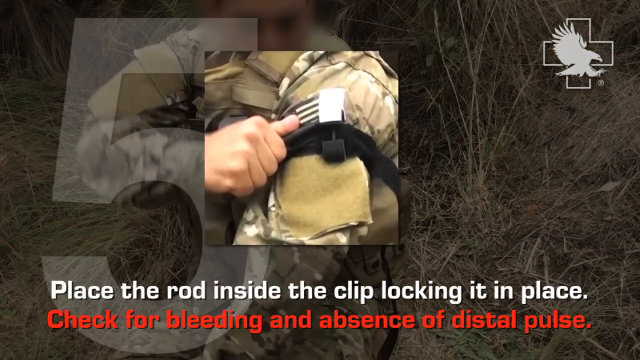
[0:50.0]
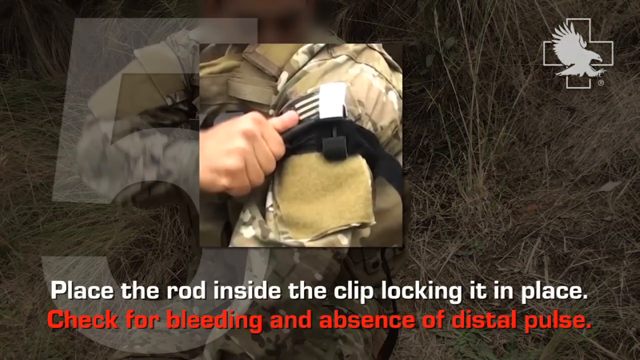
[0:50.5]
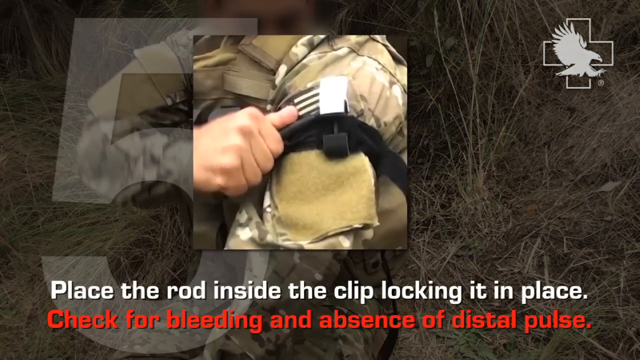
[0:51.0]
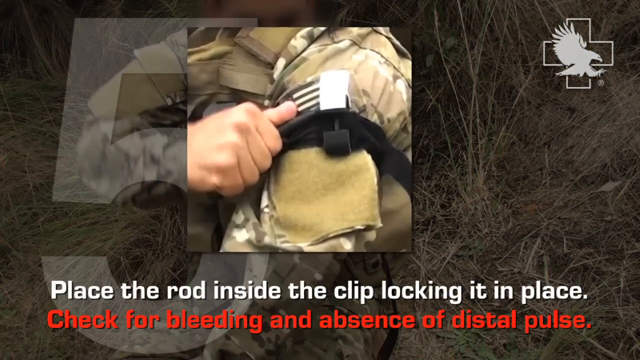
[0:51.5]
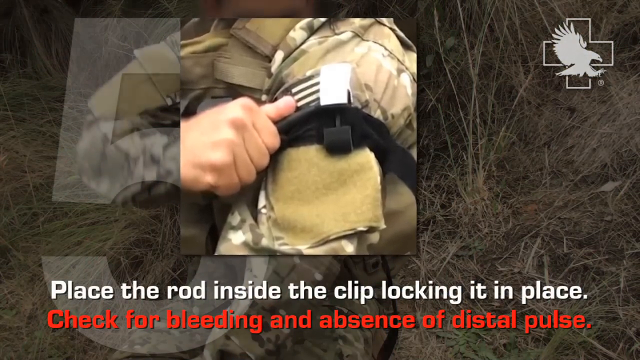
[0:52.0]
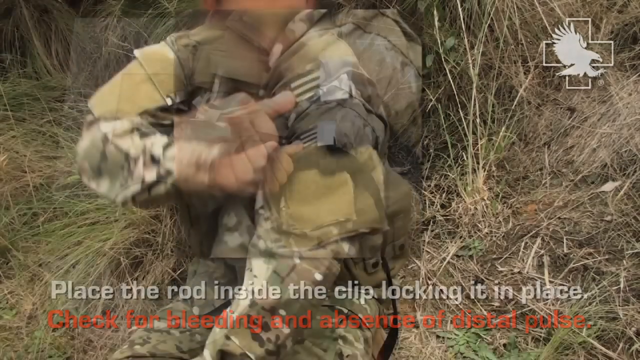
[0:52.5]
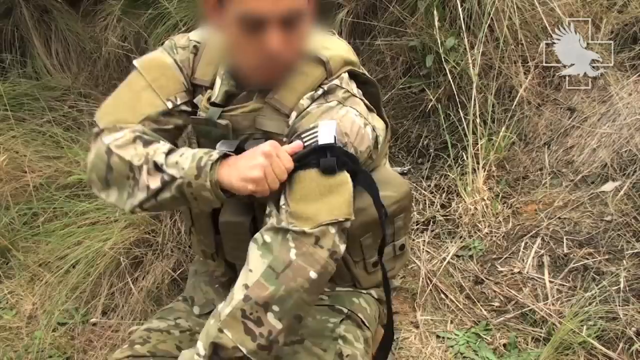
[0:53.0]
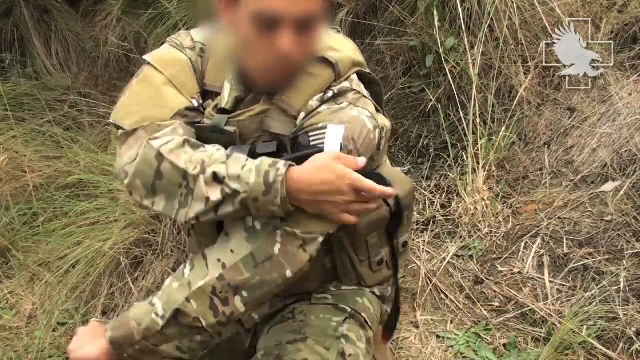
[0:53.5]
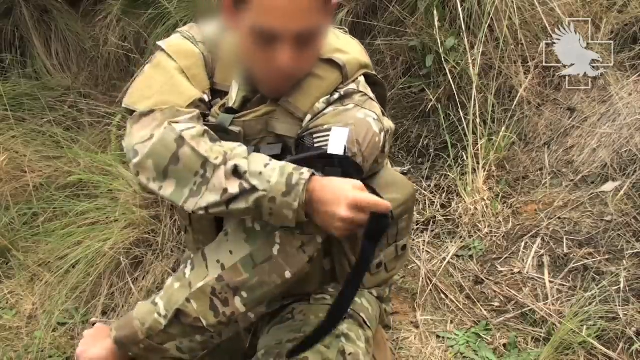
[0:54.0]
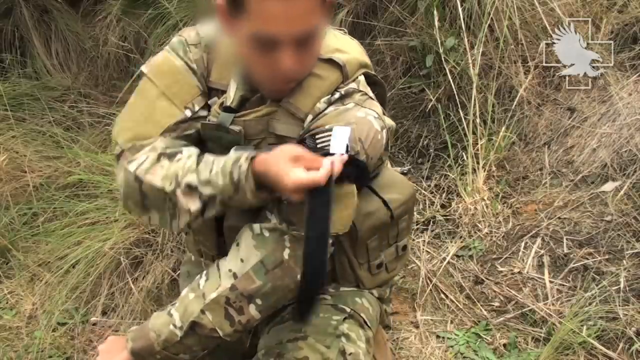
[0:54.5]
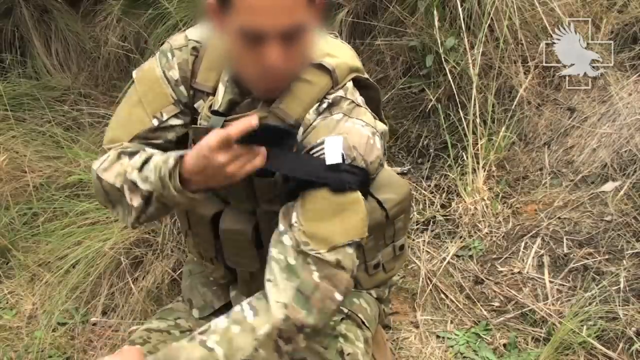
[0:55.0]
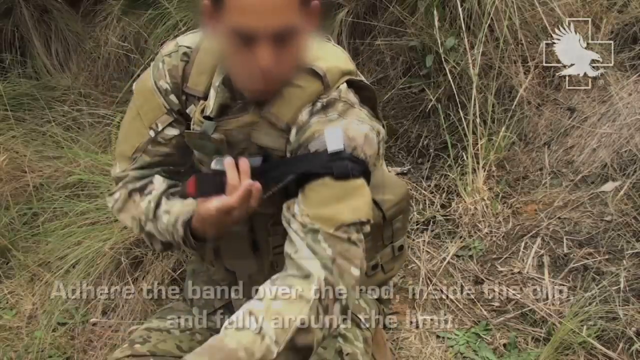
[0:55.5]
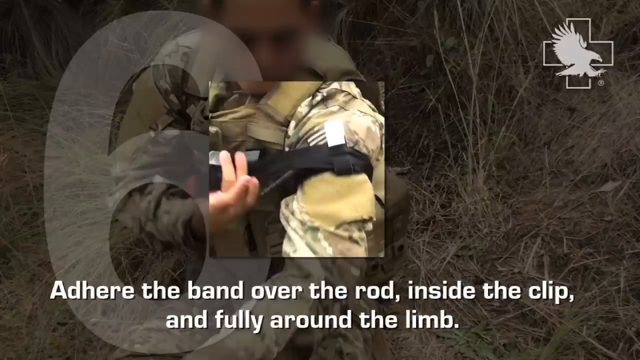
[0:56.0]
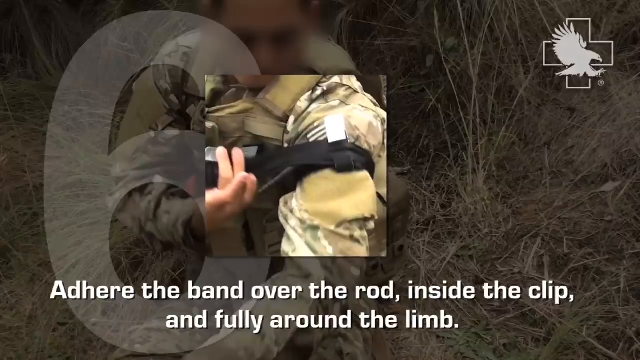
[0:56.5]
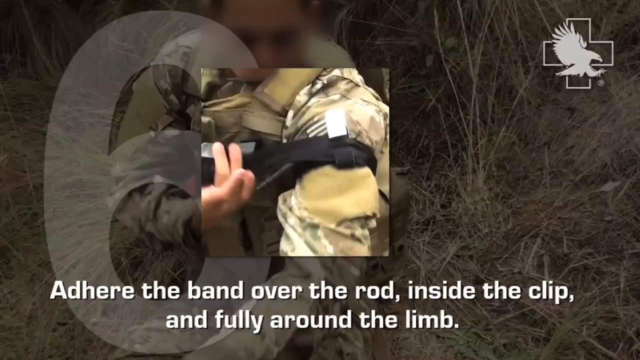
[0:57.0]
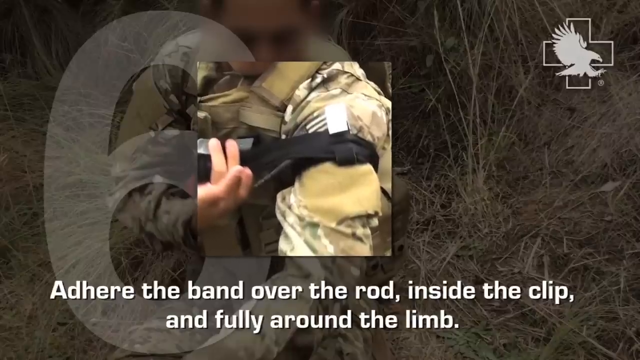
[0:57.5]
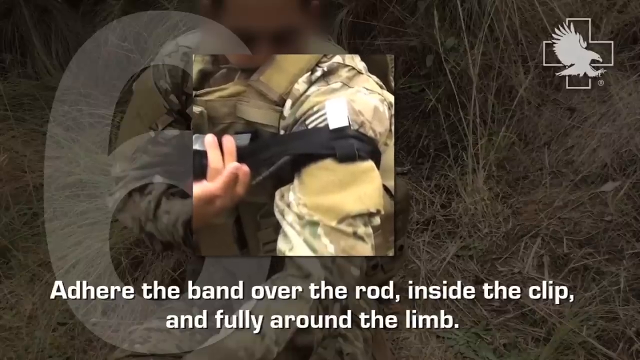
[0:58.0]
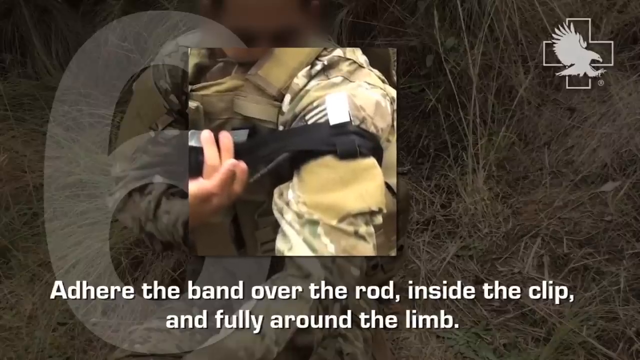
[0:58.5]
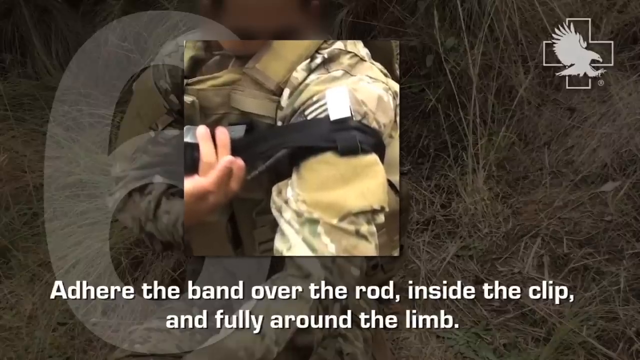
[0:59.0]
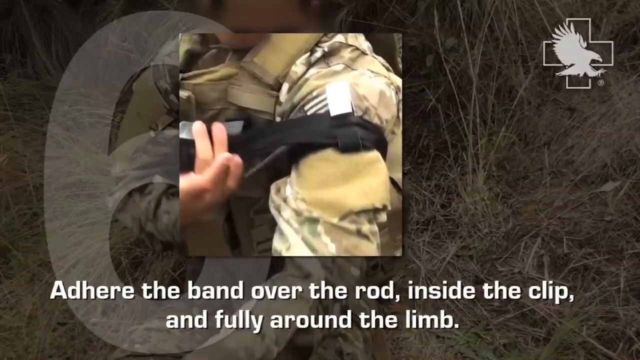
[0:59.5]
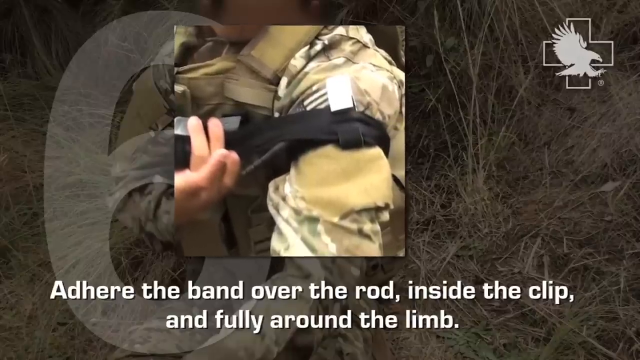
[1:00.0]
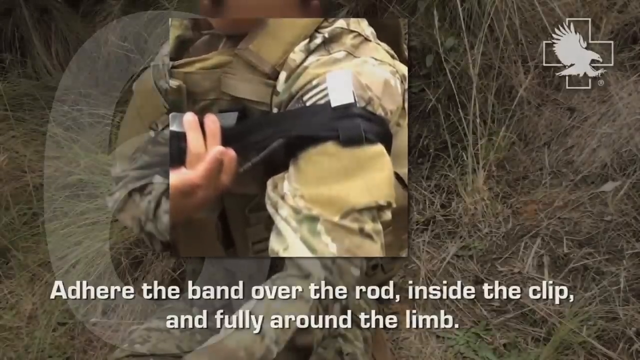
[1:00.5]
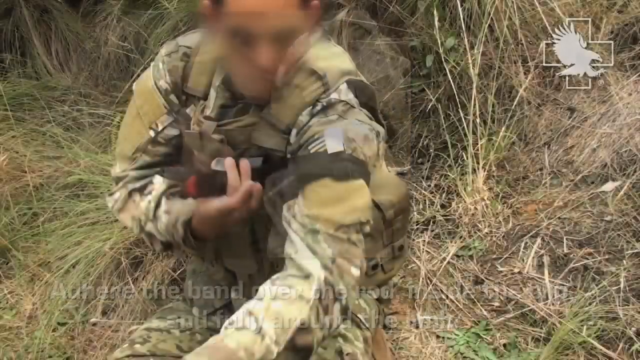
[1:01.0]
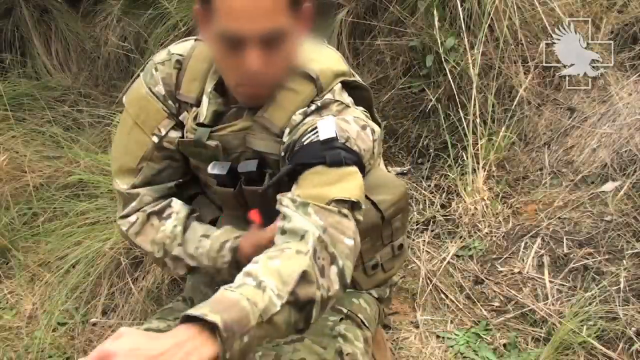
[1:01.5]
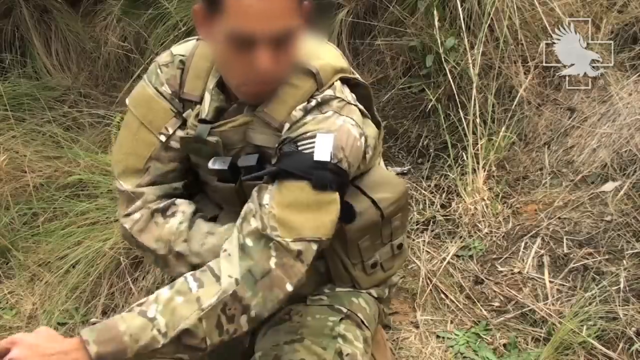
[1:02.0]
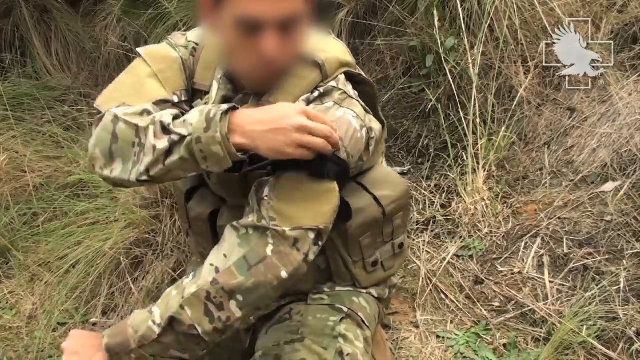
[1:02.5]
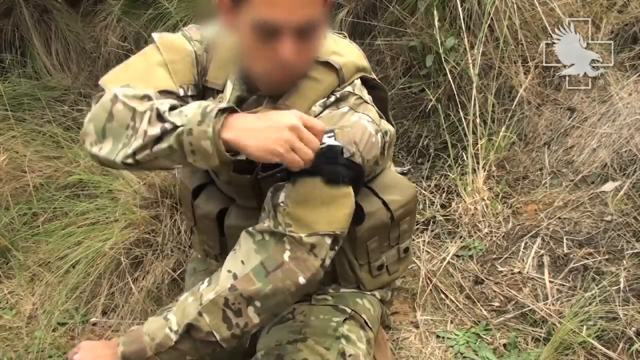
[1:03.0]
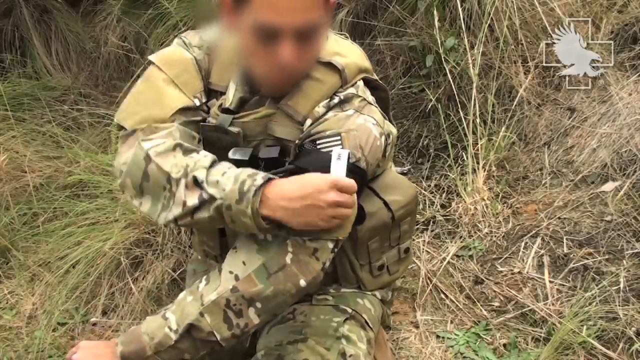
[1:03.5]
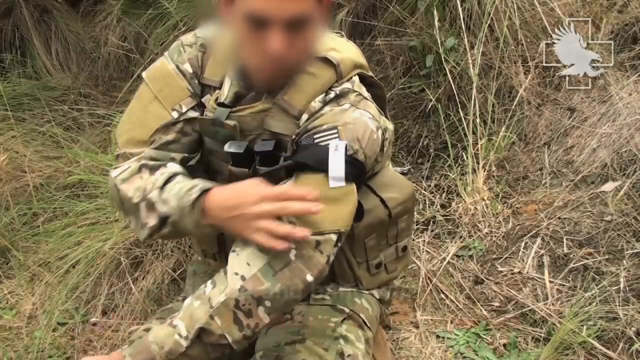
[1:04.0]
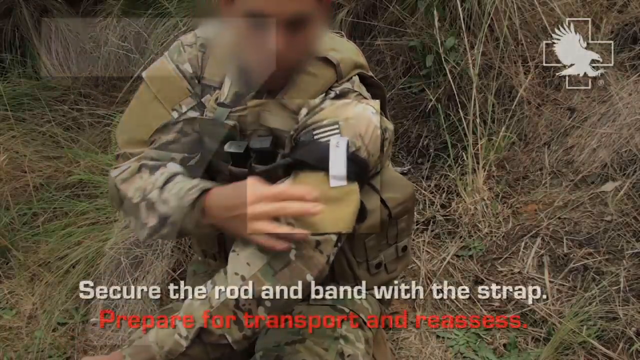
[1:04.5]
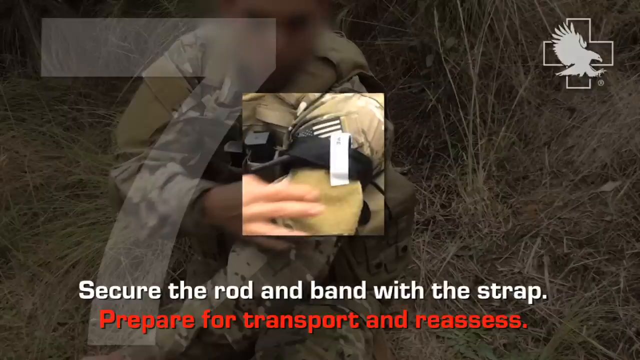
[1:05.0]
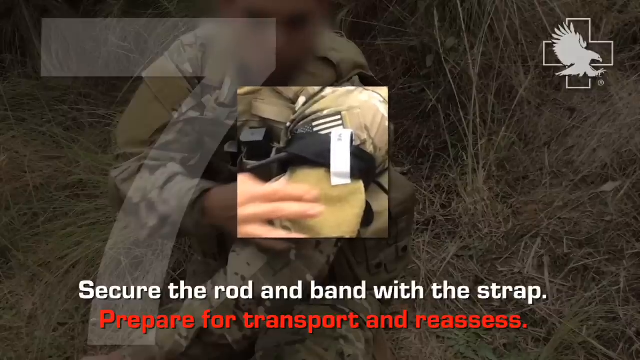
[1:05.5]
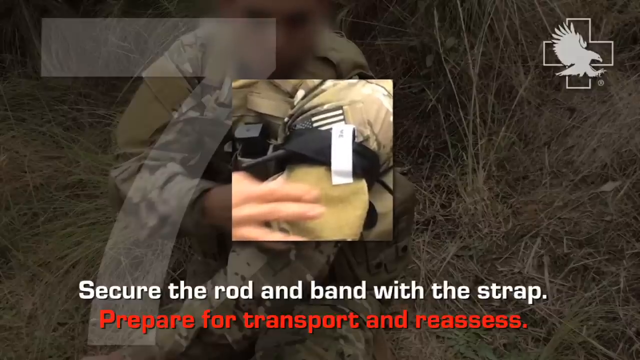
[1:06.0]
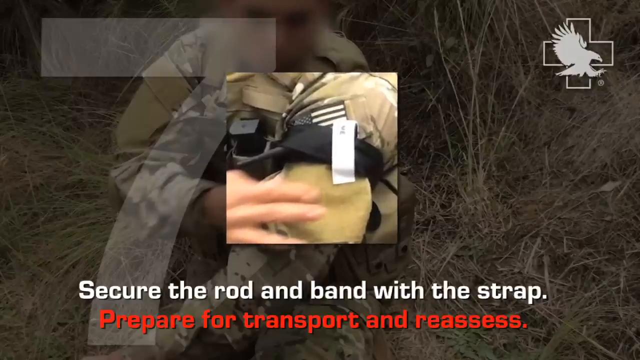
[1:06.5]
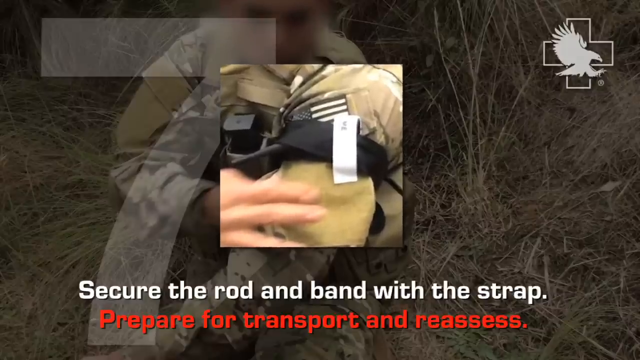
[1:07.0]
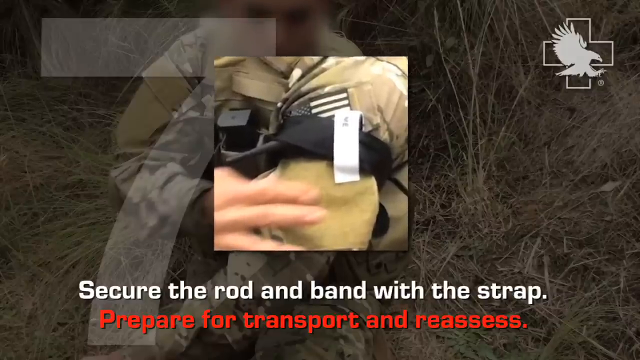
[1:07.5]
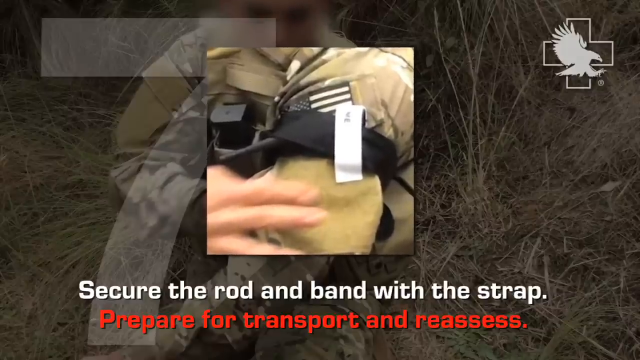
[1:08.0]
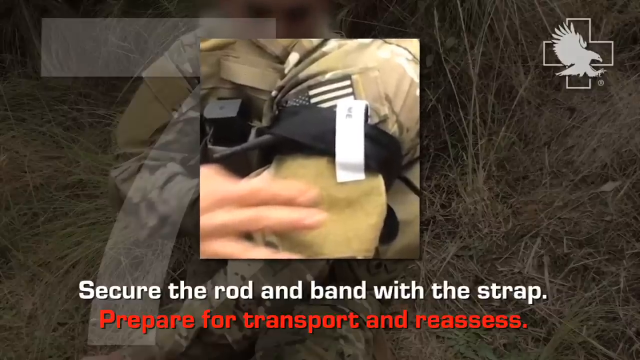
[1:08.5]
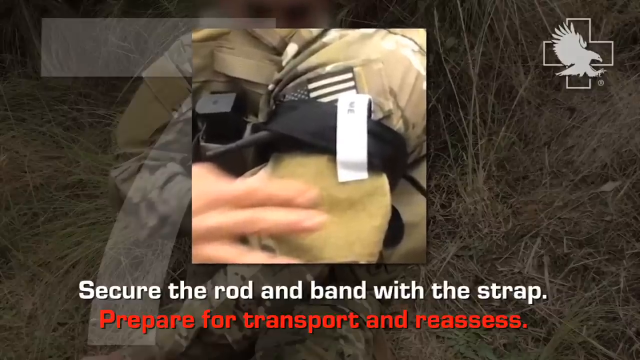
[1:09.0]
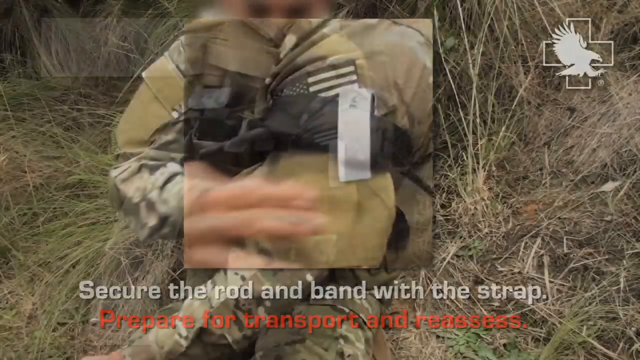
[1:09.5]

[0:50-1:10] He locks the rod back into the tourniquet on his arm. There is a lot of slack on the tourniquet, so he wraps the rest of it back around his arm after putting most of the slack over itself. He then takes a small white Velcro-type strap and locks it down over the rest of the strap, keeping the whole strap in place. The entire band, with all the slack wrapped around, is held in place by the white clip, with no slack or extra material hanging off.